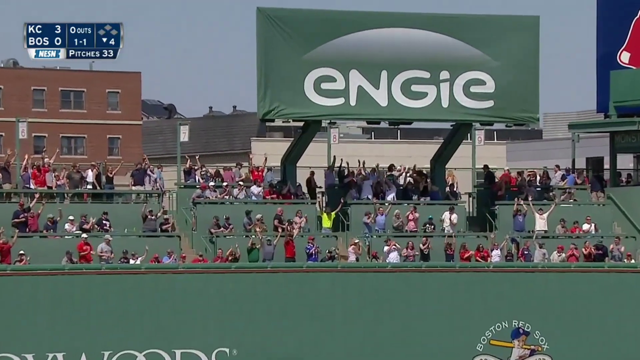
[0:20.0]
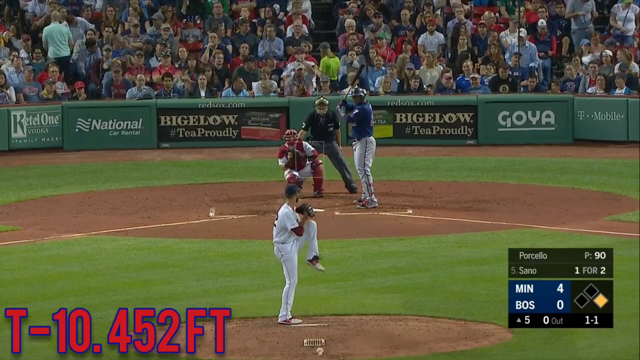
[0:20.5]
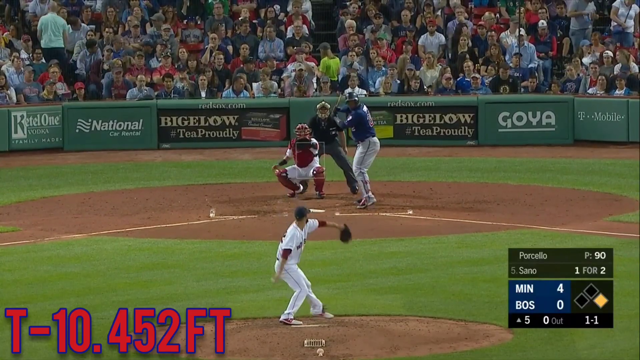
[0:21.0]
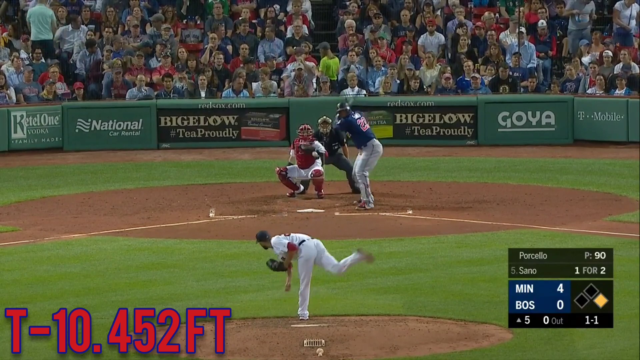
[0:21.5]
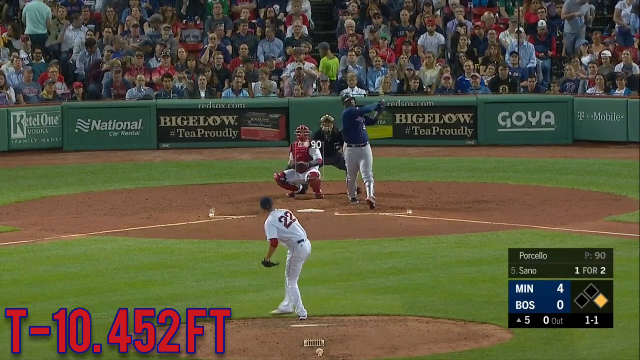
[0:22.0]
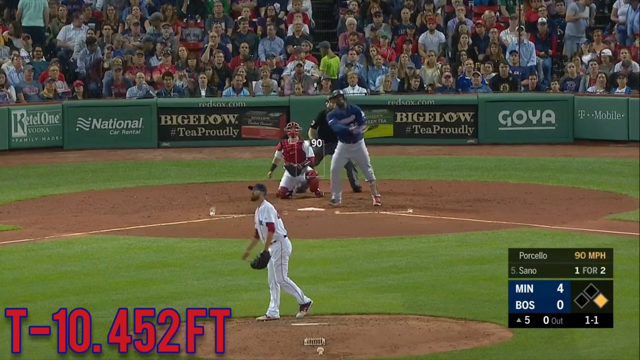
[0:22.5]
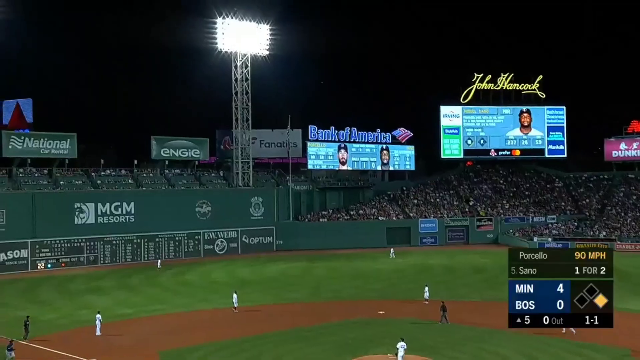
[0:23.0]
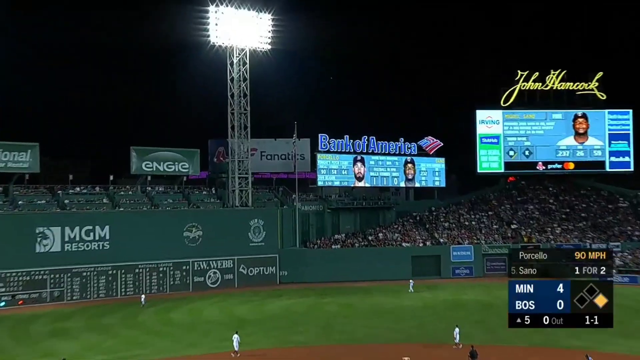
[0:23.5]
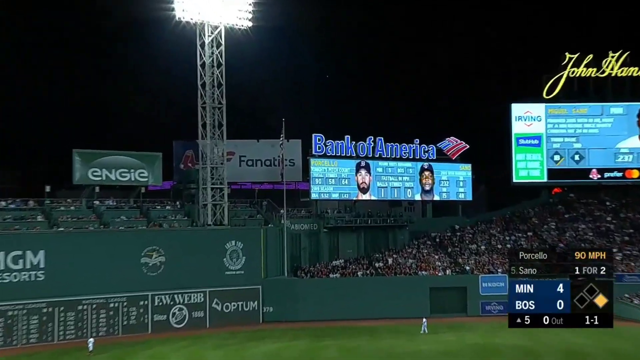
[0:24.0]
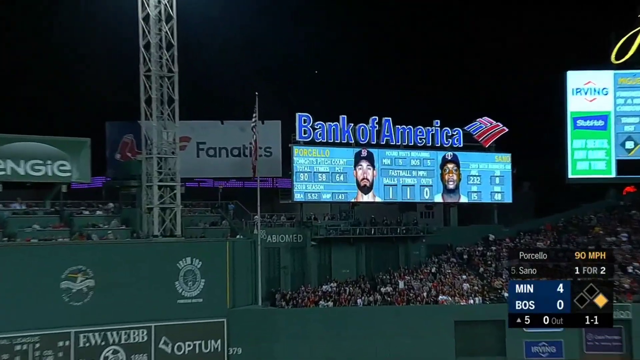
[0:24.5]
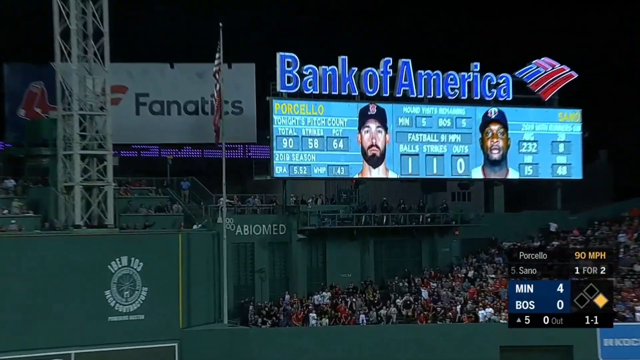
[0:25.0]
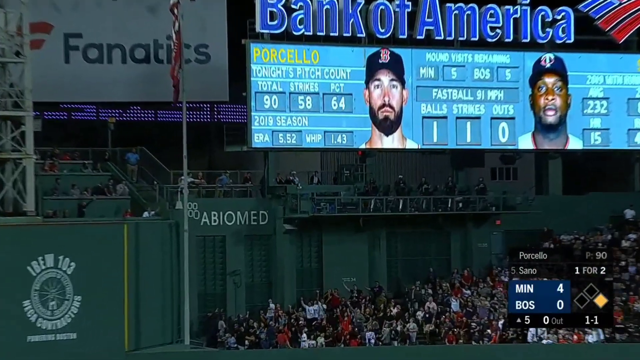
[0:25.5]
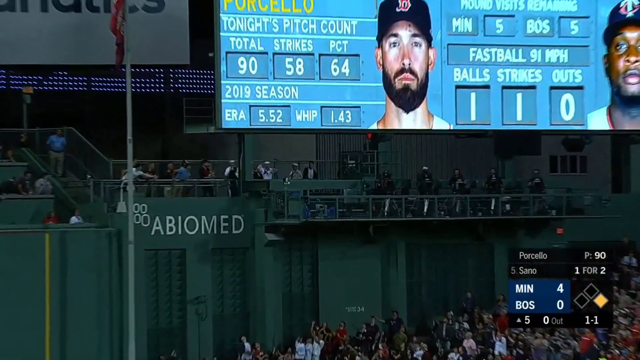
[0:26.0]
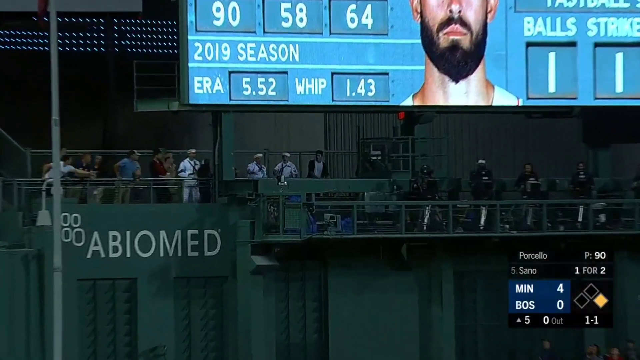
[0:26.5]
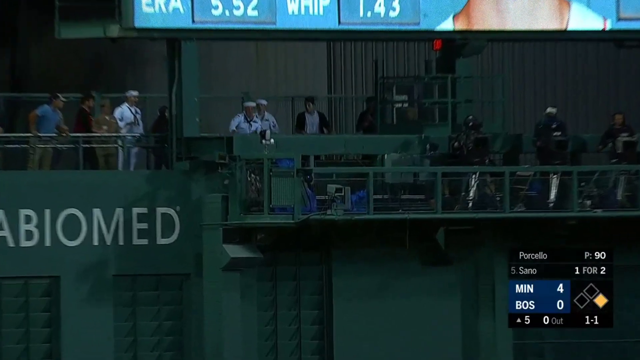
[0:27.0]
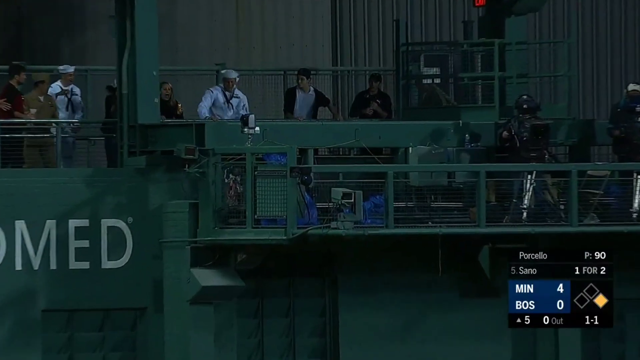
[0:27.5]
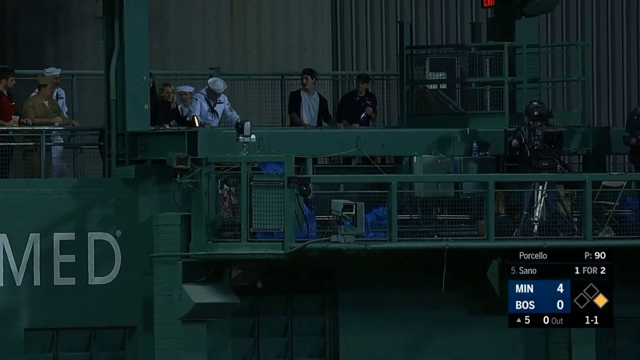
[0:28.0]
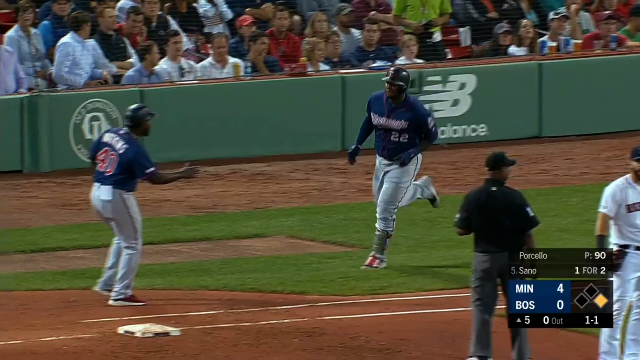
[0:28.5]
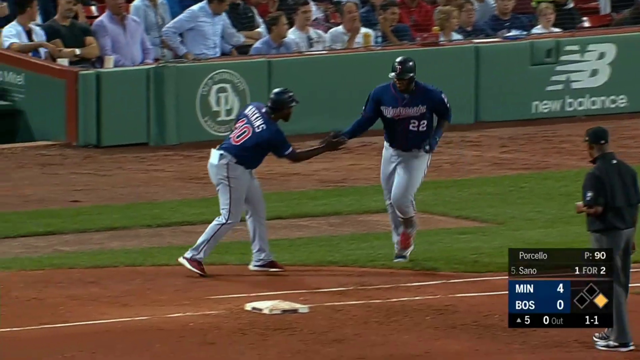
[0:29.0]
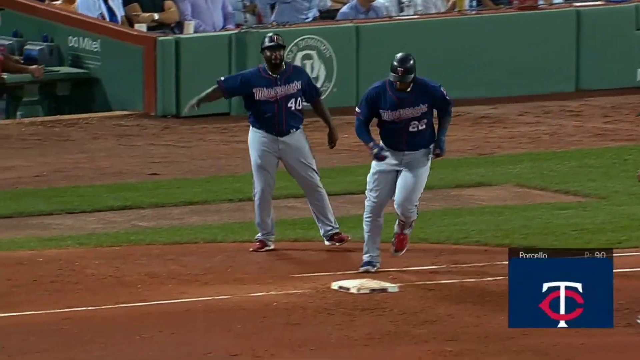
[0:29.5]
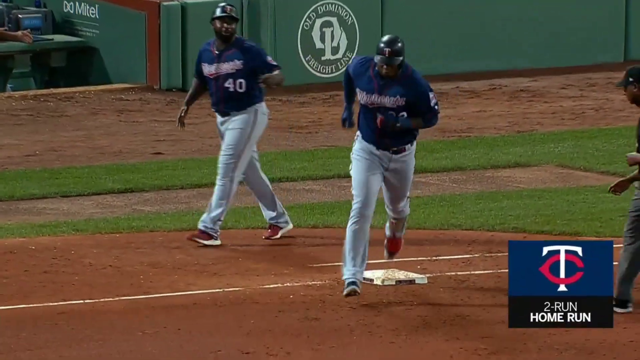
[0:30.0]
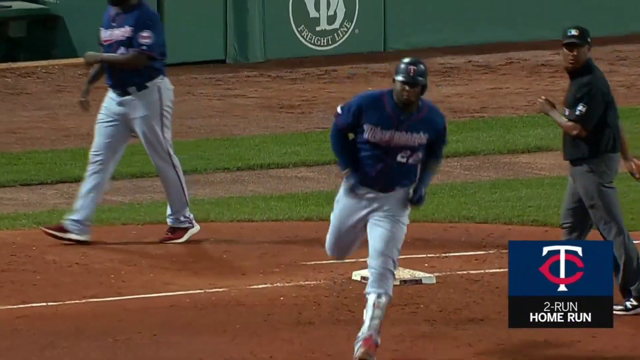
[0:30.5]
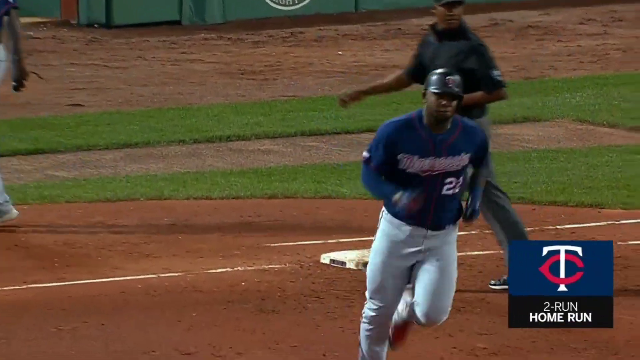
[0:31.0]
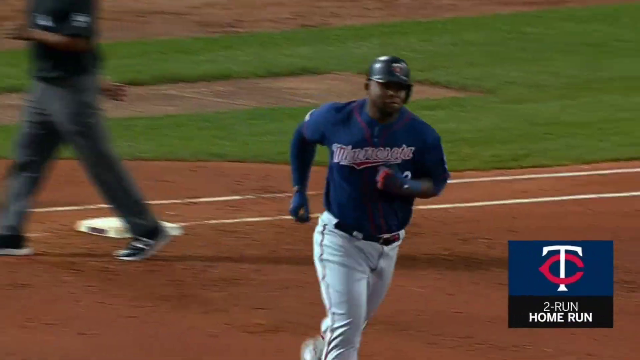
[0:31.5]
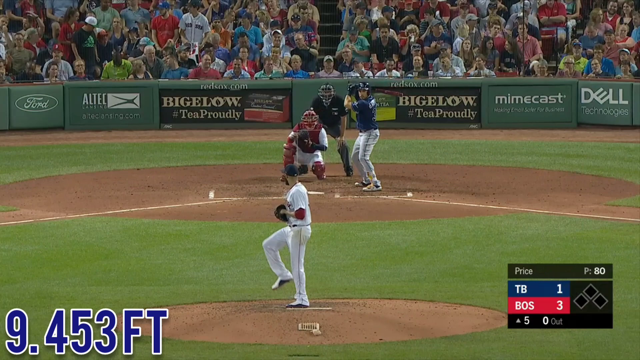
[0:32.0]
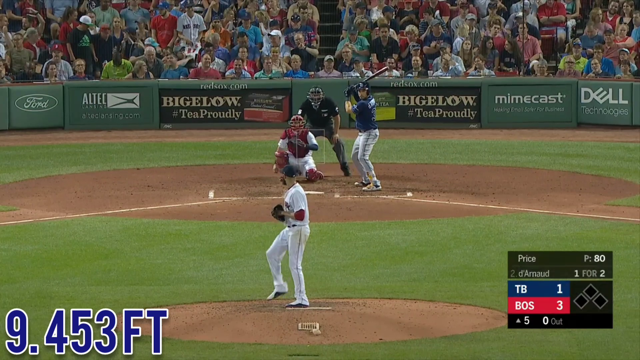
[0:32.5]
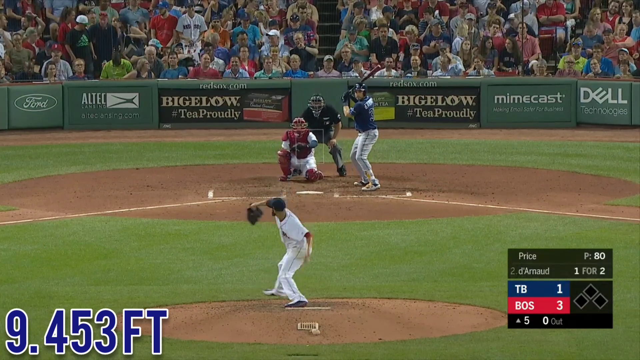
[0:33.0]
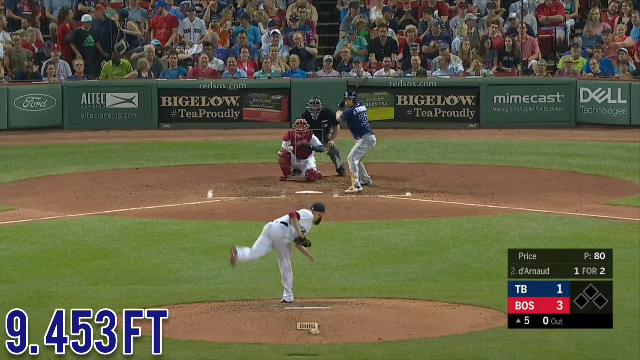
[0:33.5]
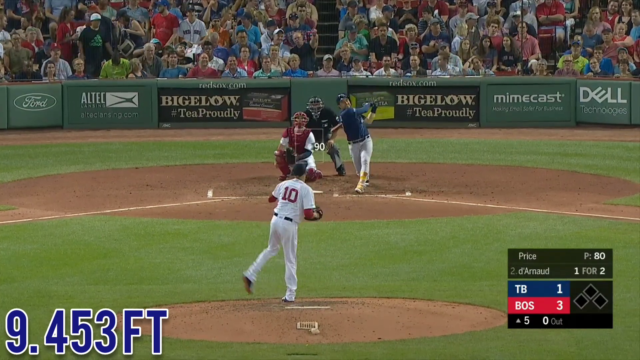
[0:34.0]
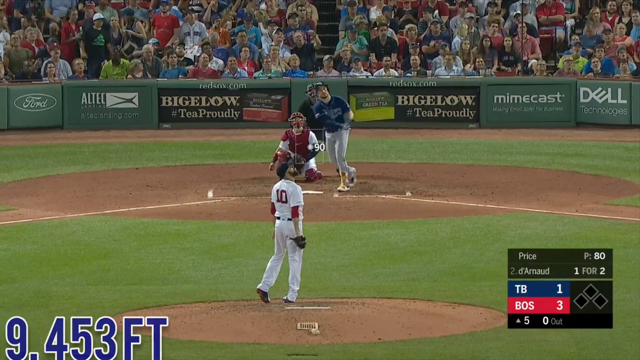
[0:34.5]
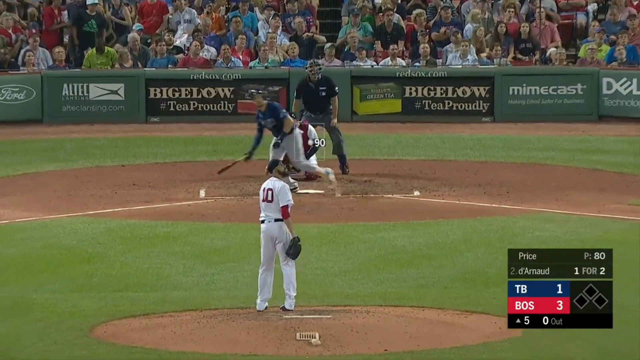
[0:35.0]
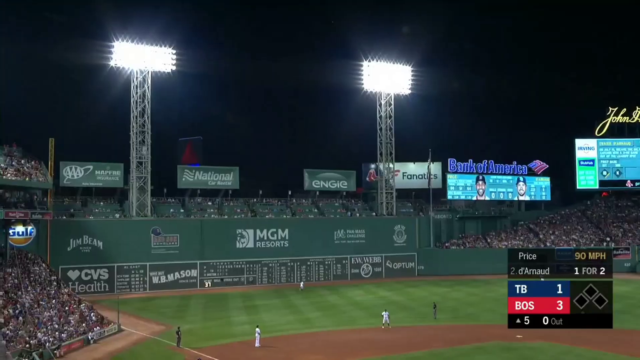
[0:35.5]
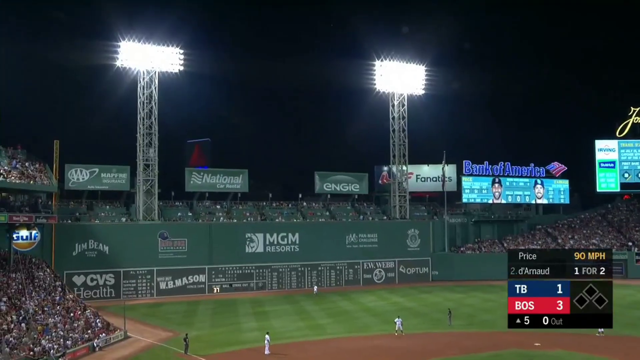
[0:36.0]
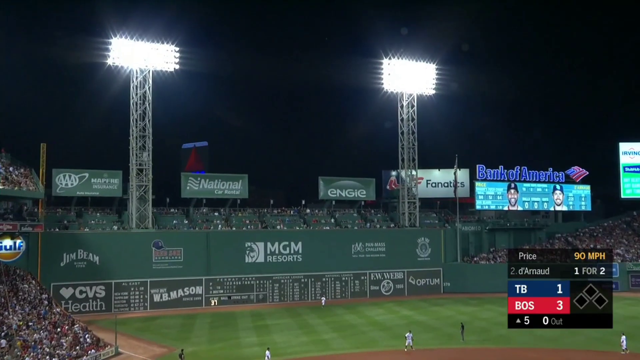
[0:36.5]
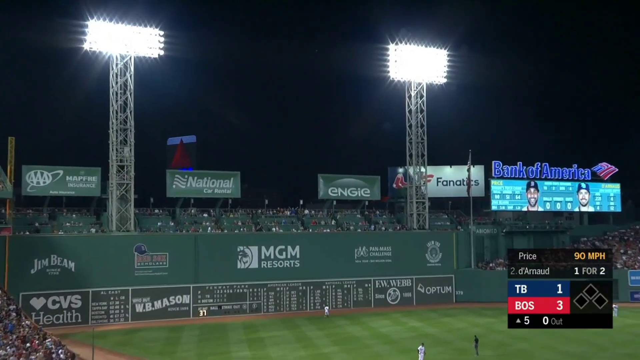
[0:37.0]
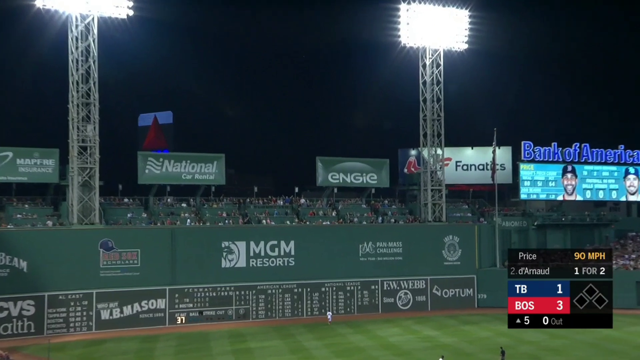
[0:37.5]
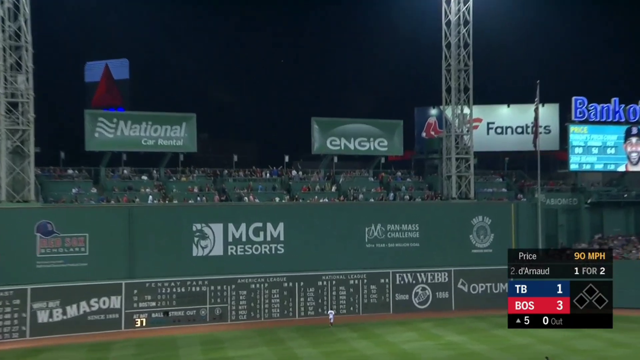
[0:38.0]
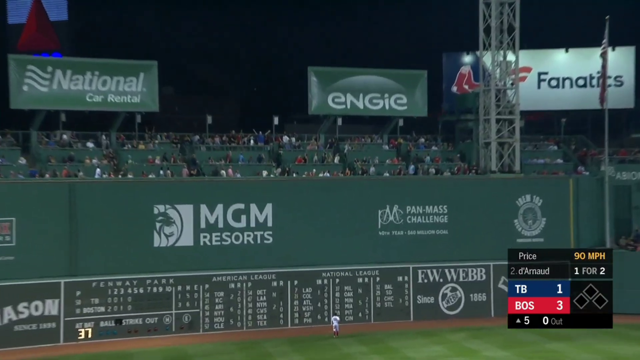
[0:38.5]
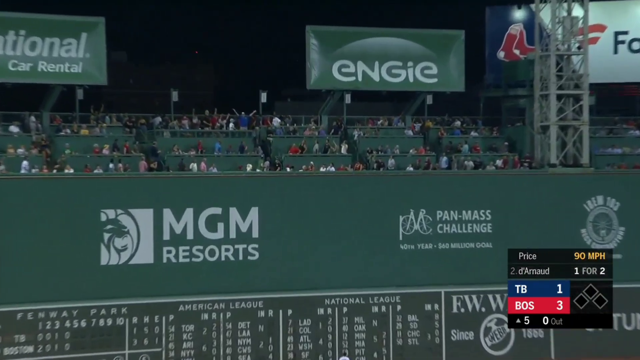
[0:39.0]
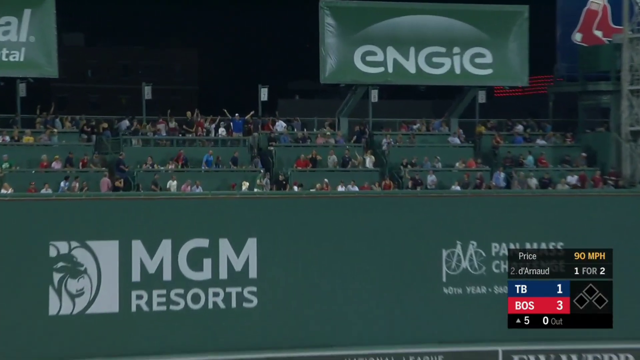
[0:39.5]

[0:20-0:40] The scene changes to what might be a replay of the previous hitter. A right-hander hits in a night game at Fenway Park between the Twins and the Red Sox, with the Sox trailing 4-0 in the top of the fifth. A Minnesota player hits a home run; his name, Porcello, is shown on the scoreboard in left center under the Bank of America sign. The ball goes into the second deck, where fans wearing sailor uniforms try to get it. It is a two-run home run for the Twins player, traveling 453 feet. The screen then changes to Tampa Bay playing Boston at Fenway, with a Tampa Bay batter up in the top of the fifth and Boston leading 3-1. The pitcher, Price, is about to throw his 81st pitch. The left-hander delivers a 90 mph fastball that is hit hard and goes way over the Green Monster, and the left fielder does not even bother to chase it.